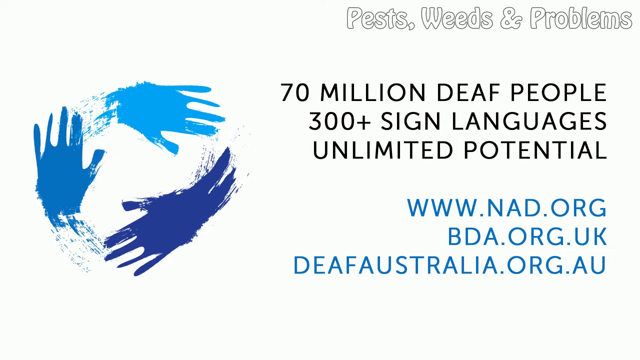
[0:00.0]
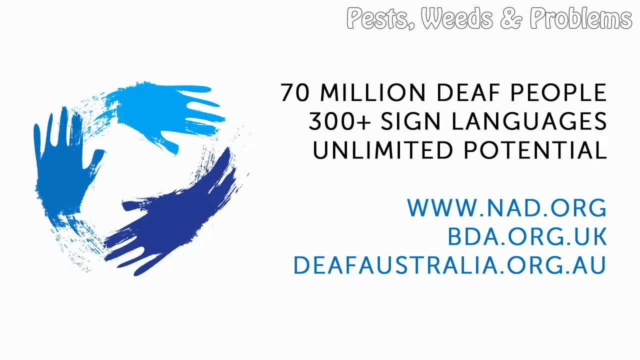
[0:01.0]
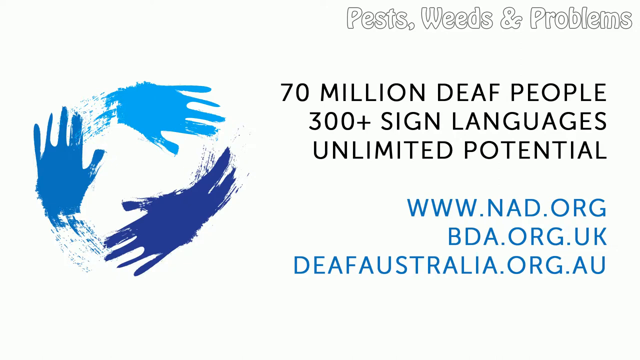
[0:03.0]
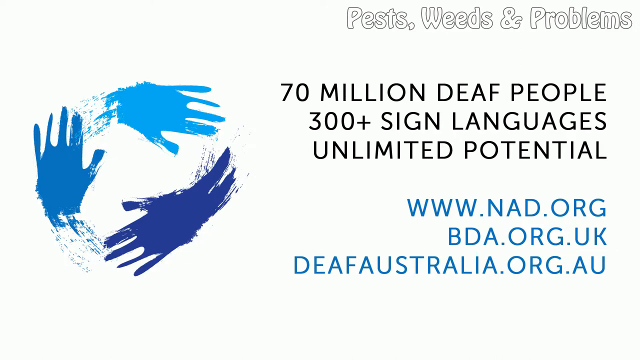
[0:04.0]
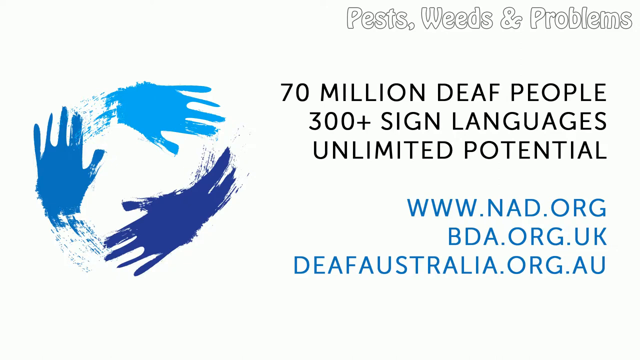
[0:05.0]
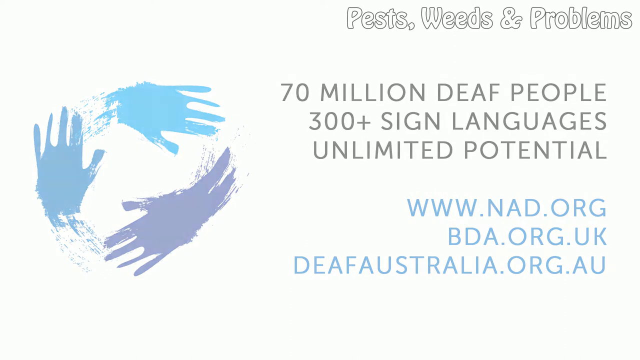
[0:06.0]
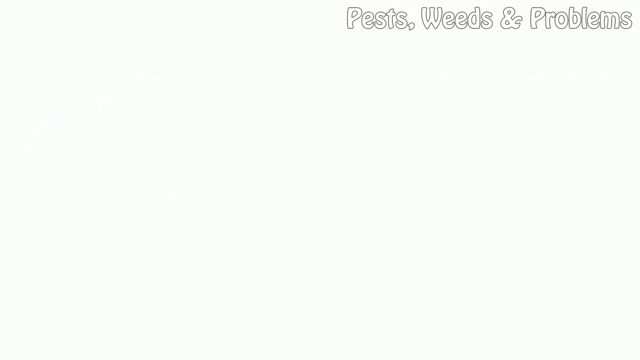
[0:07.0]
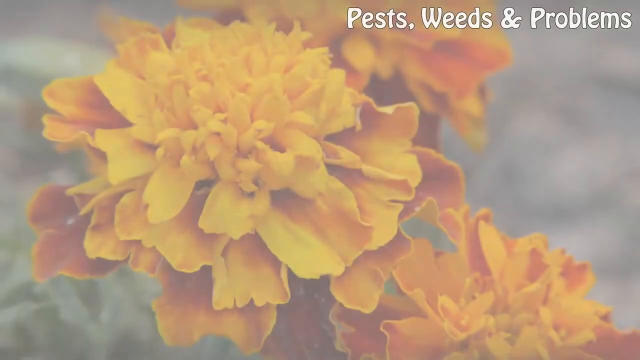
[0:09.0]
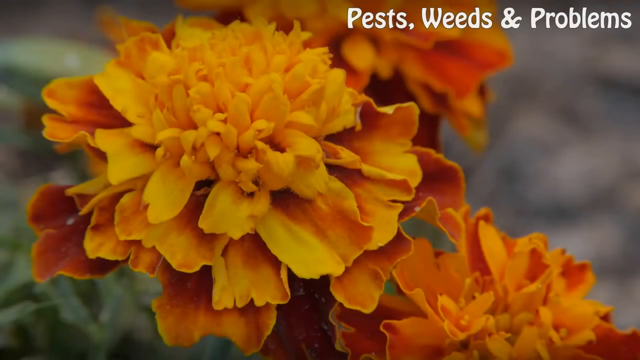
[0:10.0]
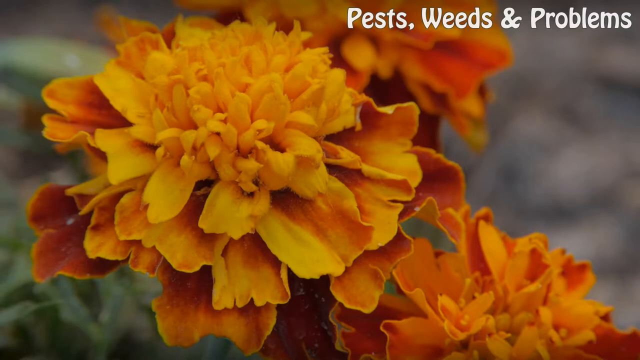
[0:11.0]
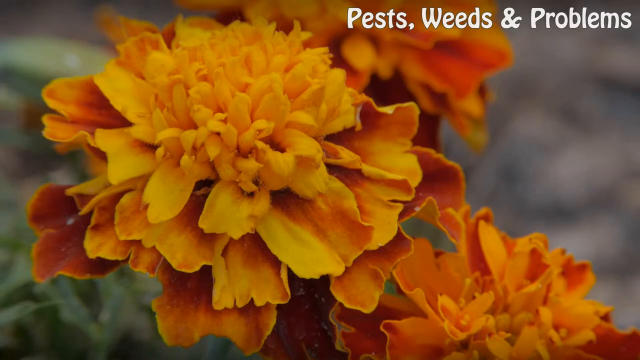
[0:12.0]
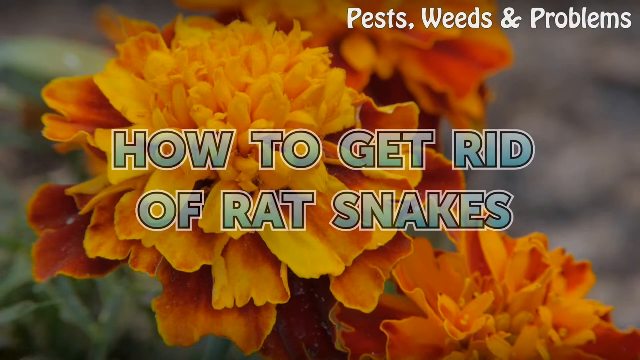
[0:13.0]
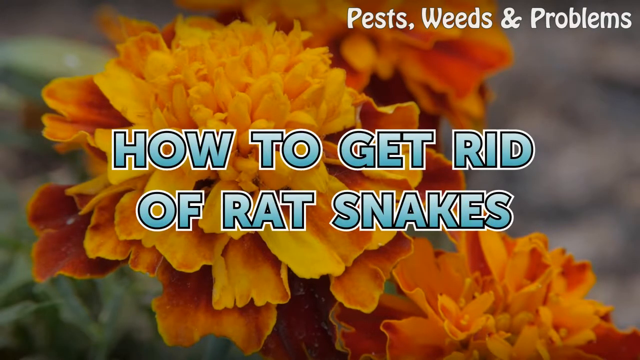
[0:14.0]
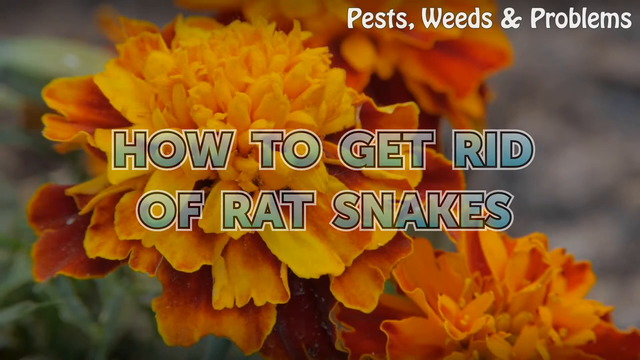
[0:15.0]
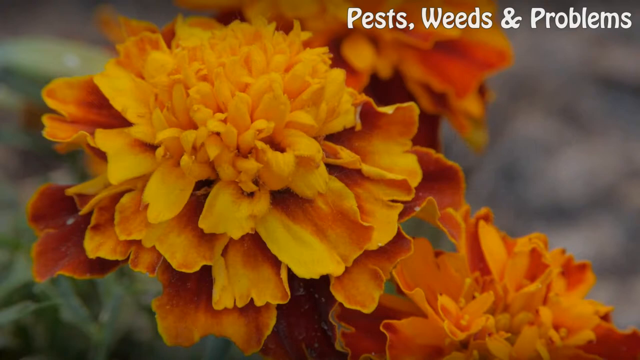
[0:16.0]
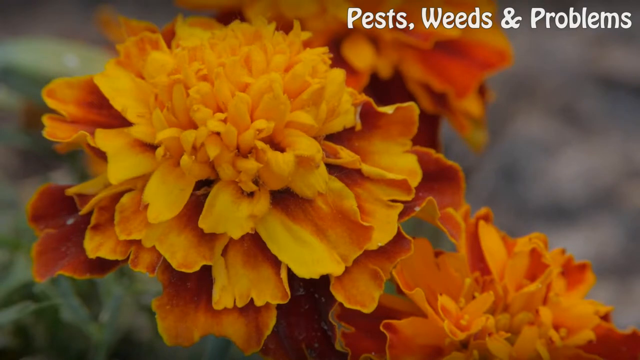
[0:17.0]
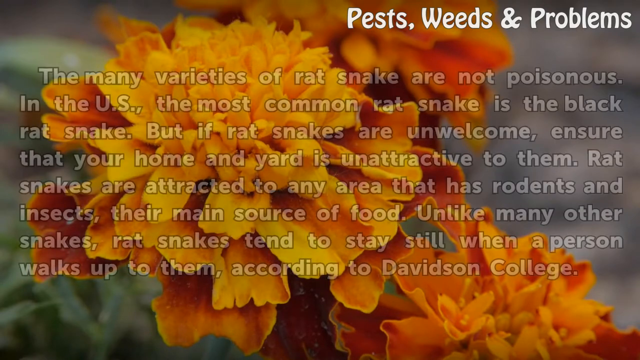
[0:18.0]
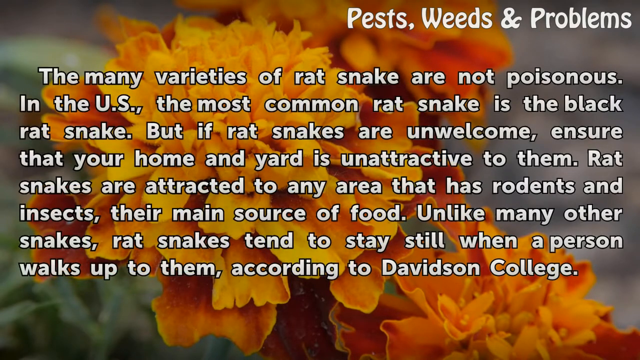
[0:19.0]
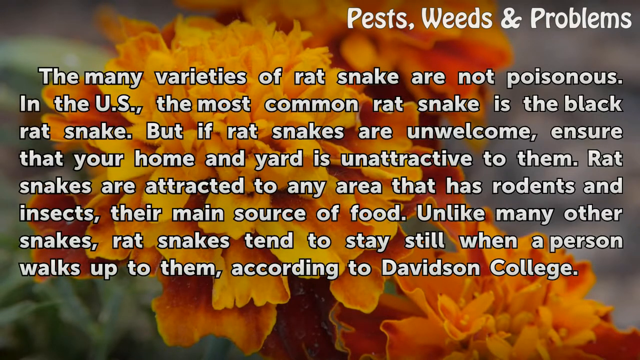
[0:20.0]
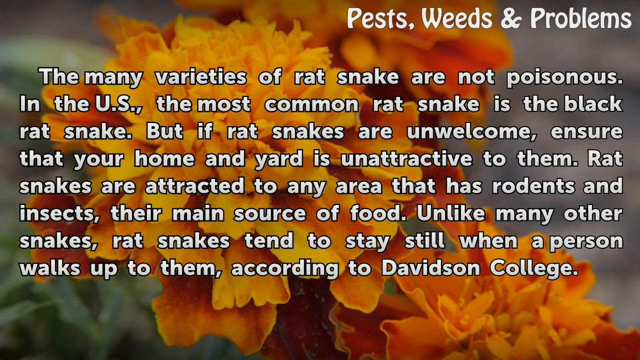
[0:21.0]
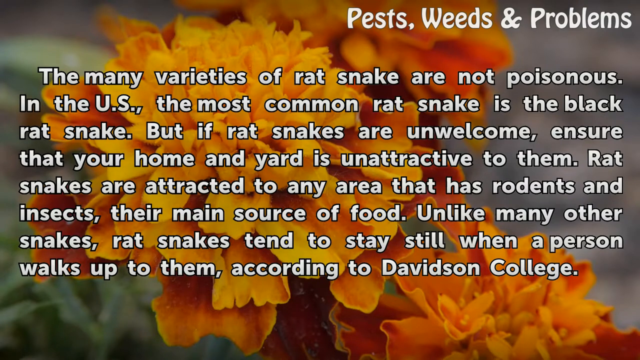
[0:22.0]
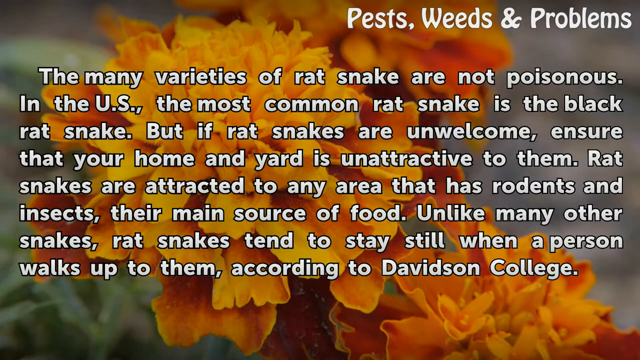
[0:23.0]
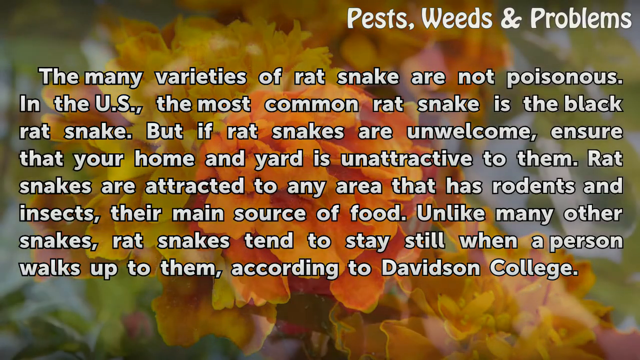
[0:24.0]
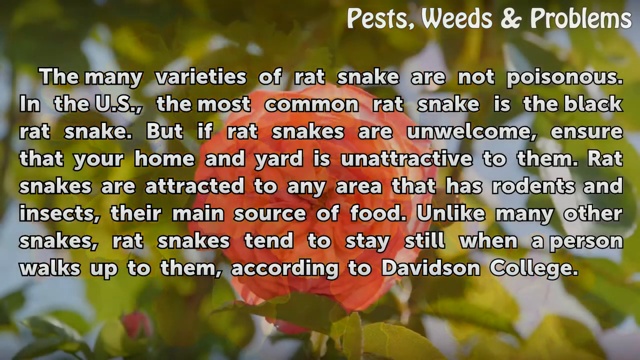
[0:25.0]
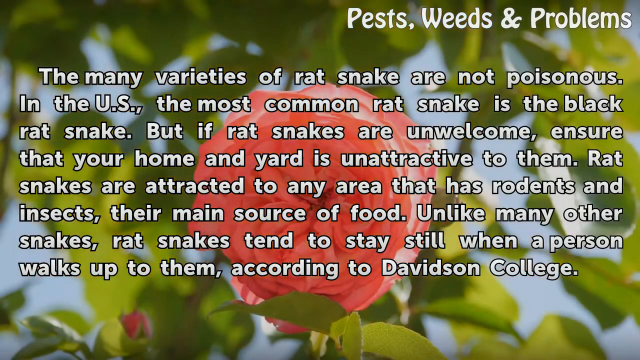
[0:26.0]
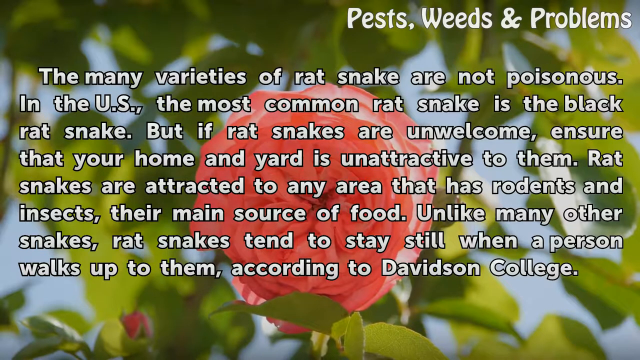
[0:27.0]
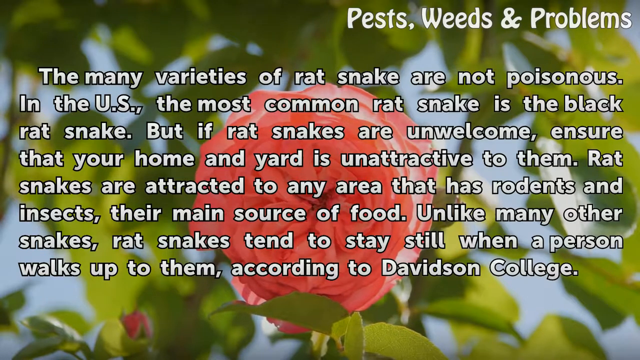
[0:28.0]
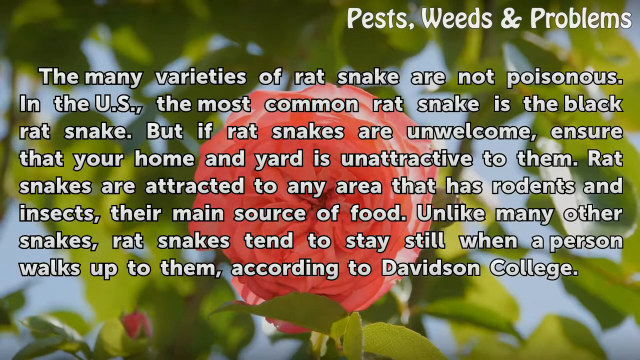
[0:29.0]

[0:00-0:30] Against a white background, white lettering at the top right says "Pests, Weeds, and Problems." Just below it, black text says "70 million deaf people, 300 + sign languages, unlimited potential." Below that, blue text reads "www.nad.org," then "bda.org.uk," and then "deafaustralia.org.au." On the left side is a circular show of hands: light blue at the top, darker blue underneath and a medium shade of blue to the left side. The image changes to a background that is faded gray on the right and faded green on the left, with "pests, weeds, and problems" in white at the top right. In the center are about three or four flowers with orange and lighter orange petals, and lettering in the center says "how to get rid of rat snakes." The white lettering then changes to say "many varieties of rat snake are not poisonous. In the U.S., the most common rat snake is the black rat snake. But if rat snakes are unwelcome, ensure that your home and yard is unattractive to them. Rat snakes are attracted to any area that has rodents and insects, their main source of food. Unlike many other snakes, rat snakes tend to stay still when a person walks up to them, according to Davidson College." The background then changes to a blue sky with dark and light-colored leaves, and at the center is a pinkish rose with its petals all crushed together in a circle.